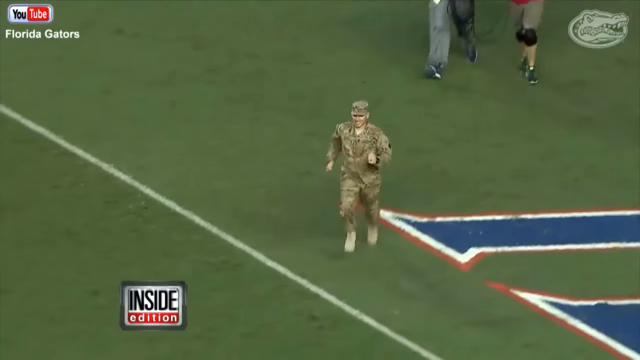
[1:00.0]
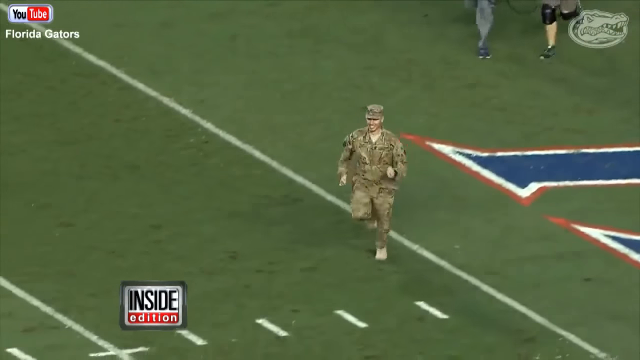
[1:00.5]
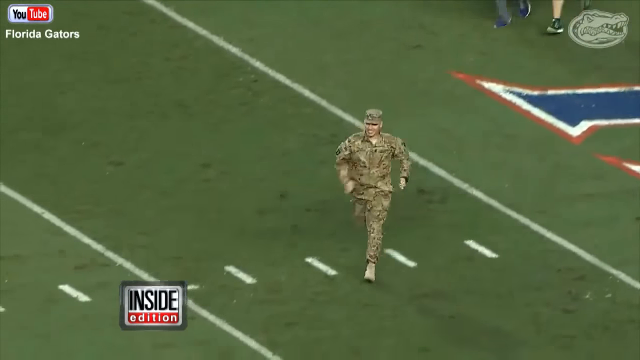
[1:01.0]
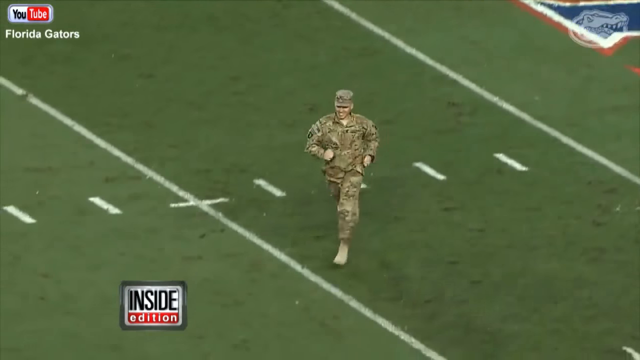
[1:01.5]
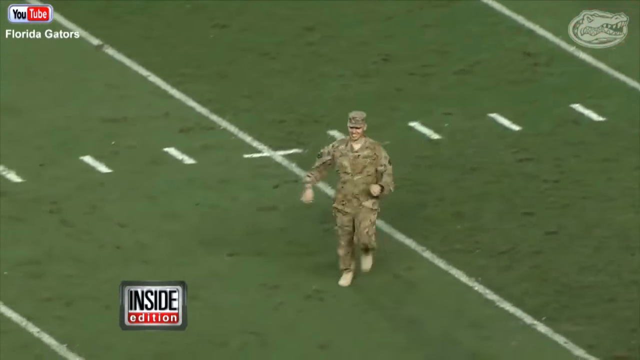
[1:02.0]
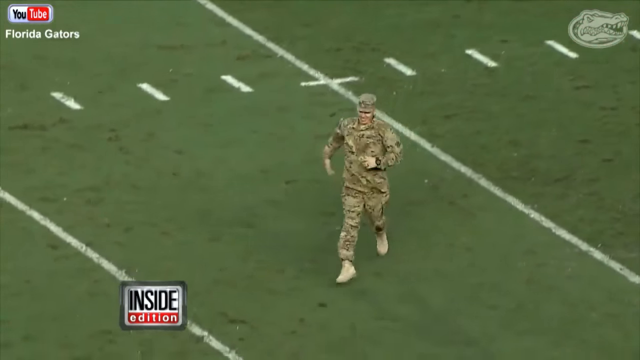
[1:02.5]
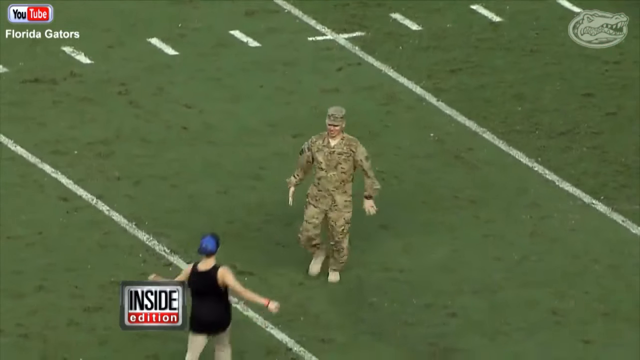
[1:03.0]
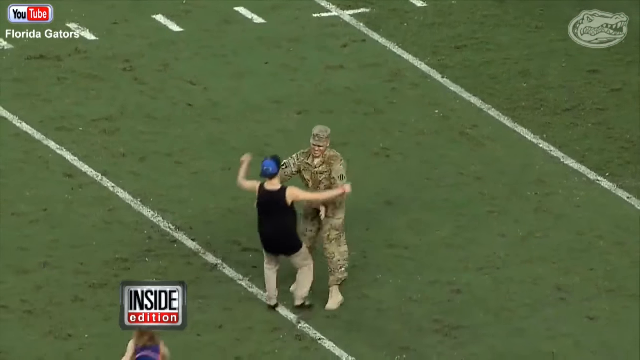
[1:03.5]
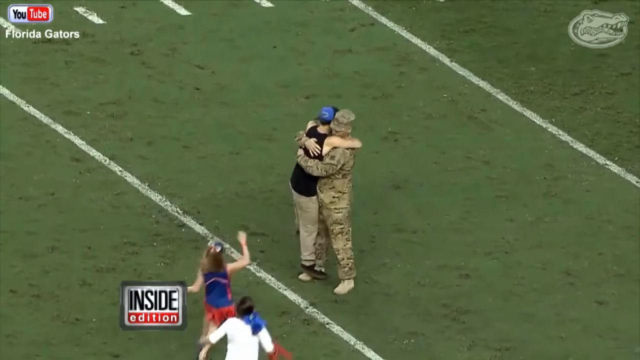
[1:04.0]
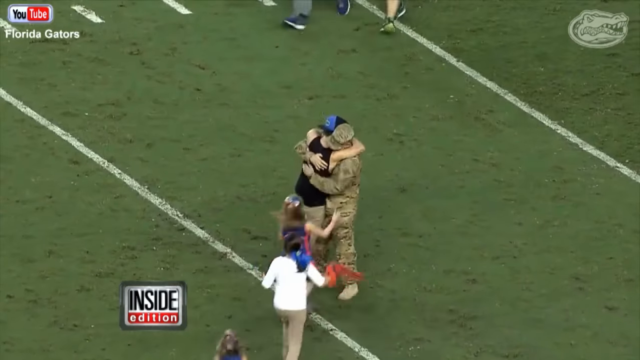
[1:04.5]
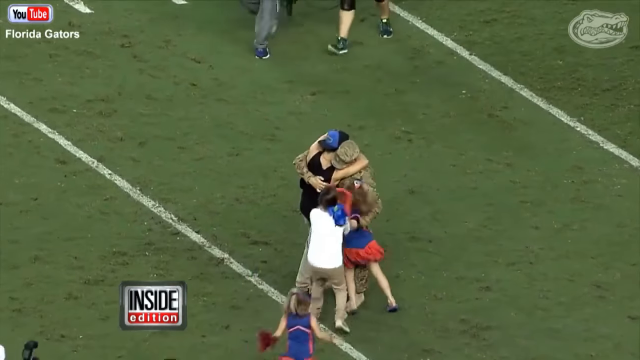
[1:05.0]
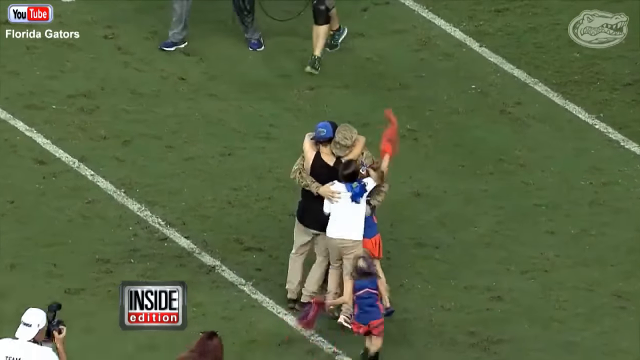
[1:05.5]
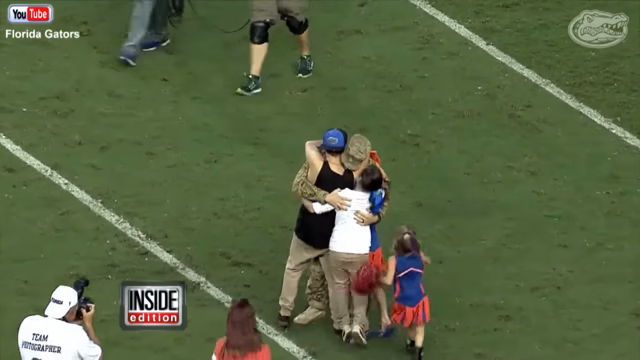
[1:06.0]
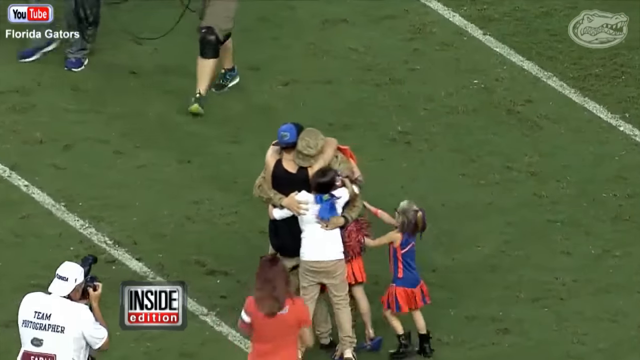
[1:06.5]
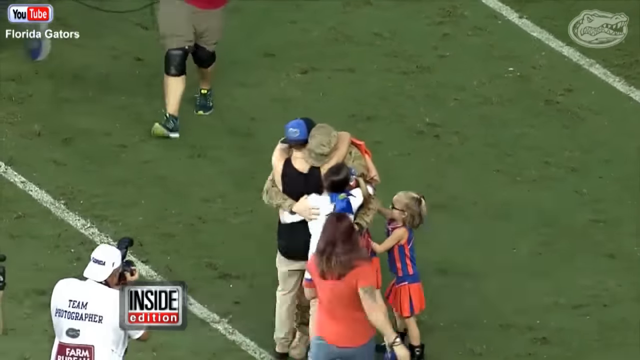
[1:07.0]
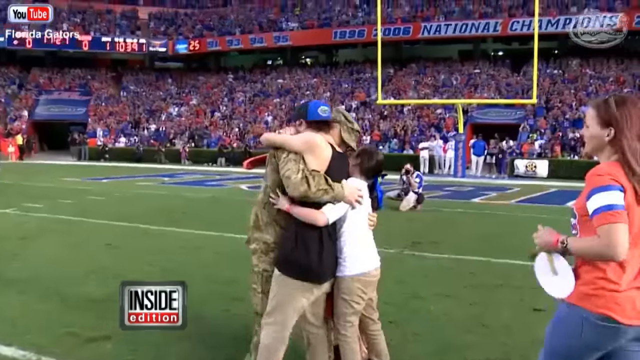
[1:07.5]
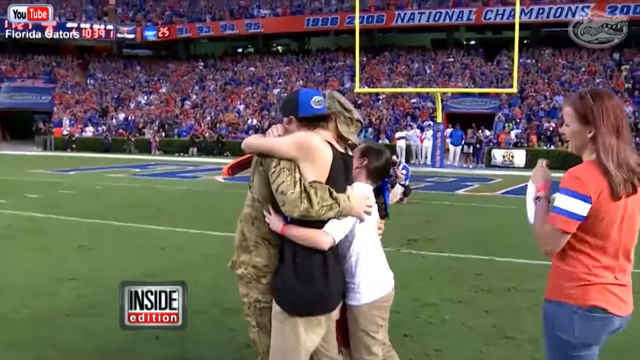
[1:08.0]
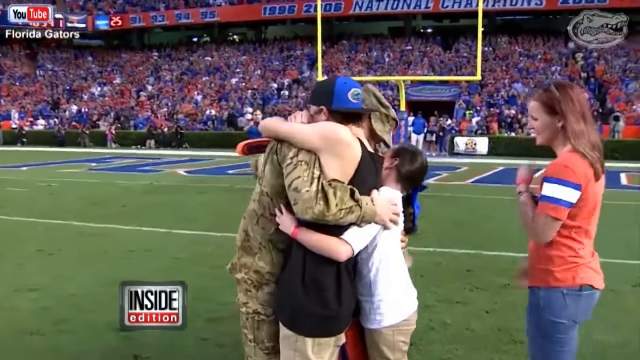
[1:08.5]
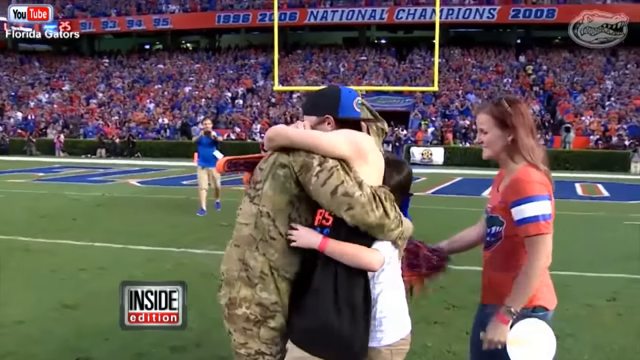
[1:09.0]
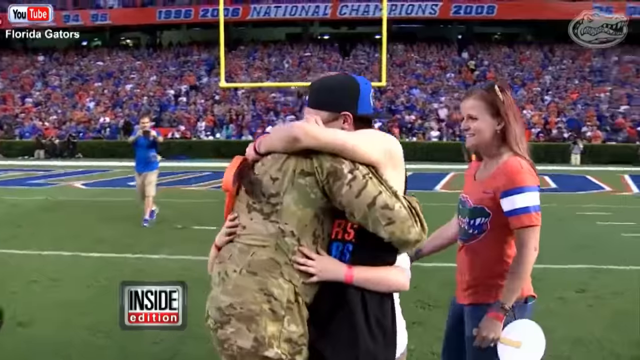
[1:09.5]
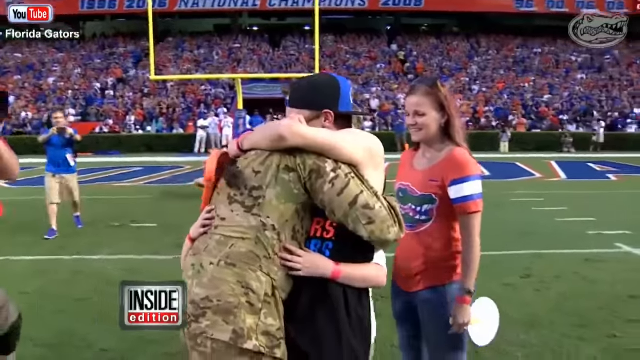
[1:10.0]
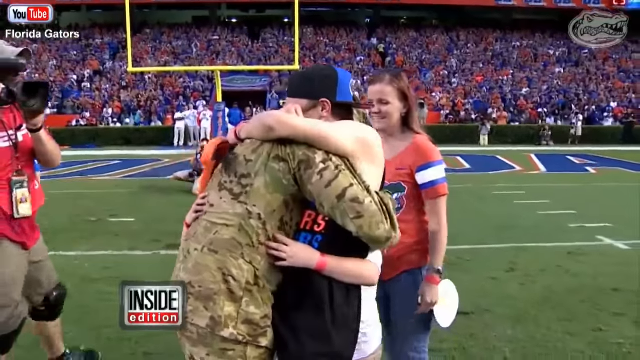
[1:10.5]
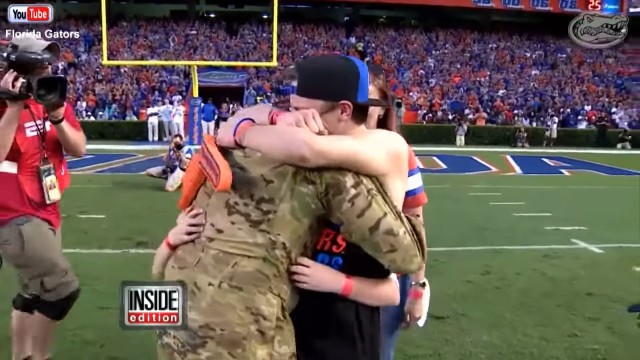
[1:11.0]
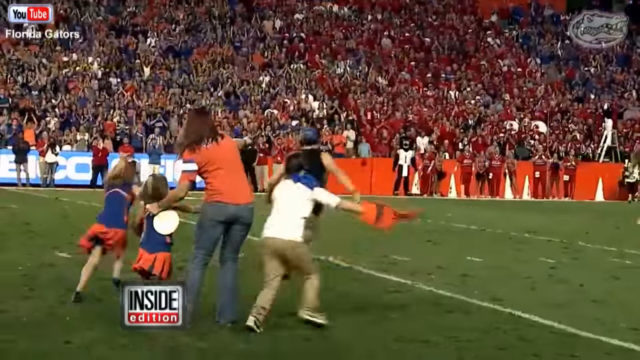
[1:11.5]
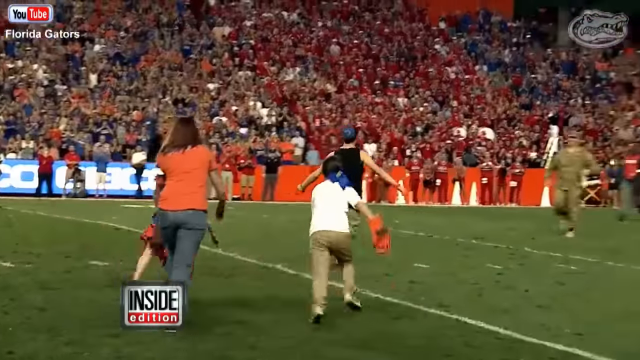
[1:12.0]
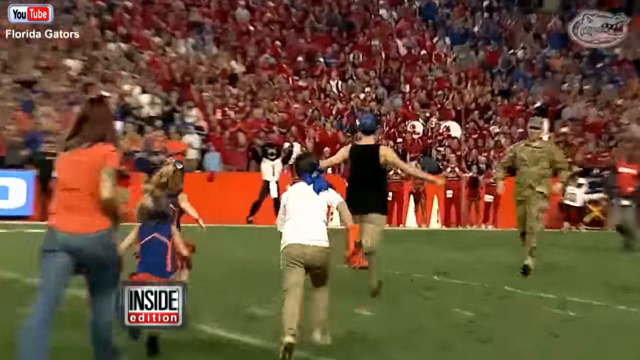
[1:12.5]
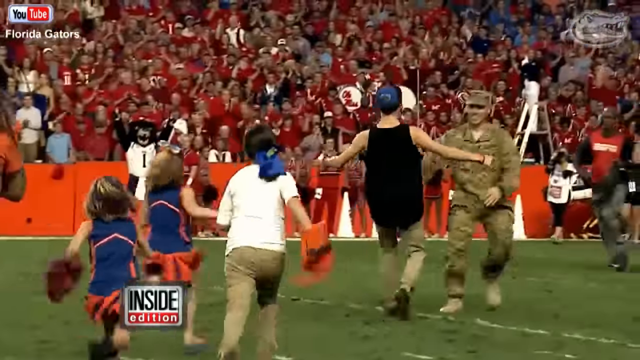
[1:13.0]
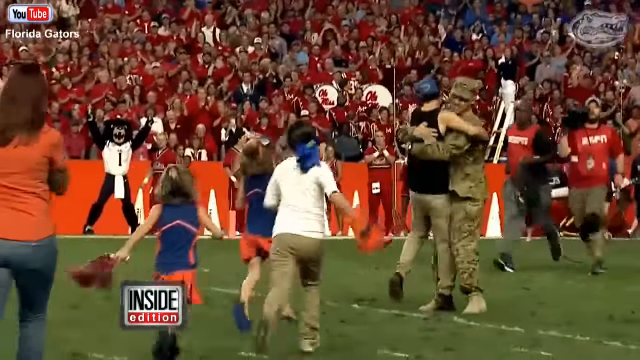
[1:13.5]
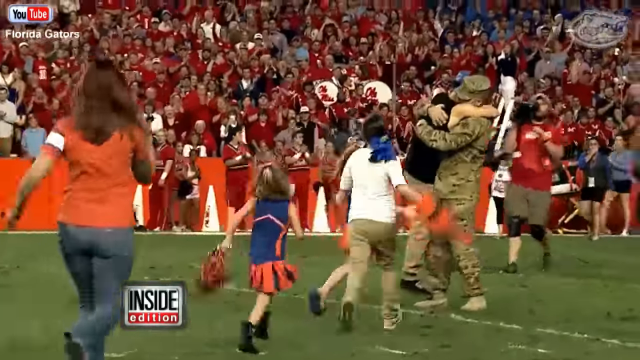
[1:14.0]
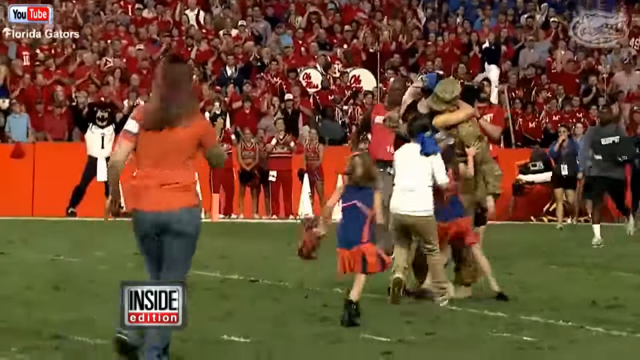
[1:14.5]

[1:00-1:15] The dad continues running across the field as the family runs to him. The son reaches him first and they hug, followed by the three daughters, with the mom following up. They form a big family group hug. The family seems very surprised.